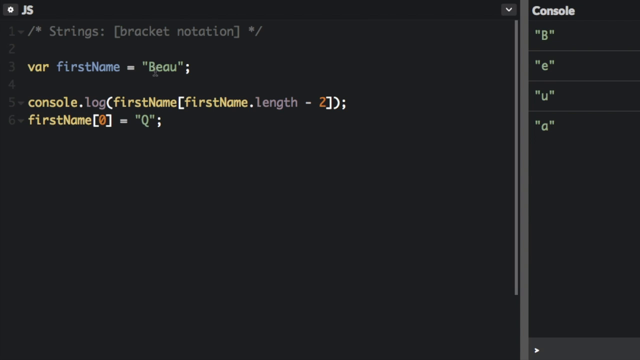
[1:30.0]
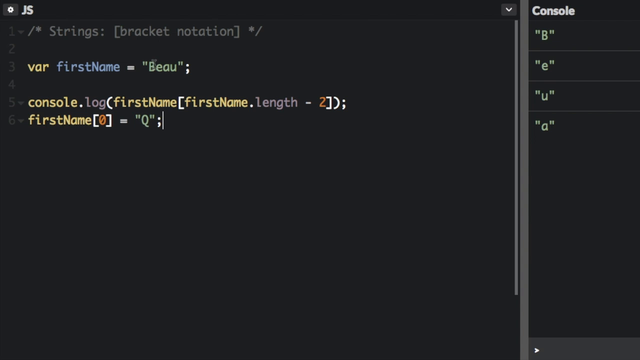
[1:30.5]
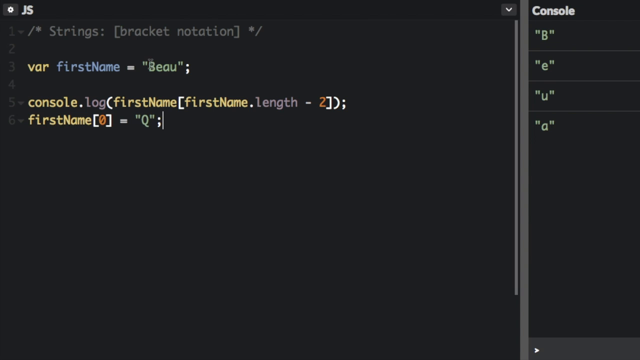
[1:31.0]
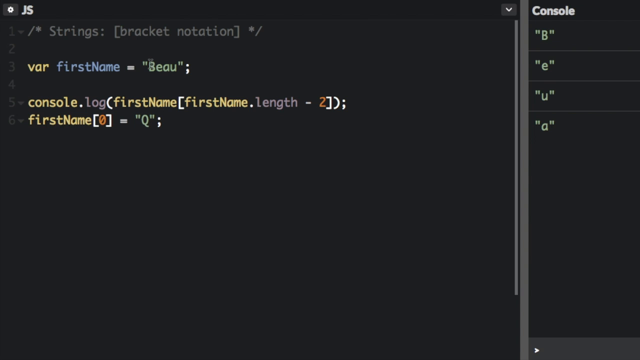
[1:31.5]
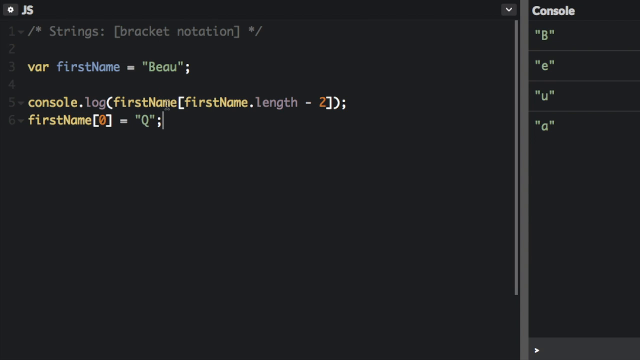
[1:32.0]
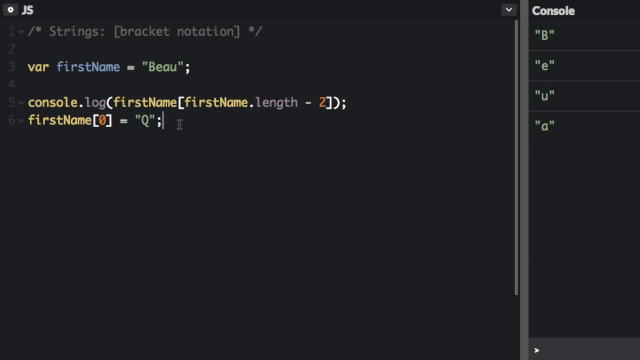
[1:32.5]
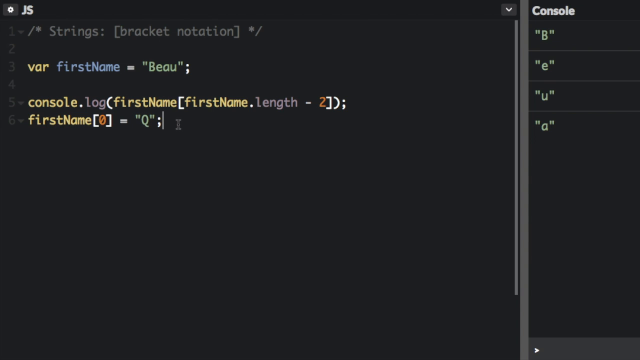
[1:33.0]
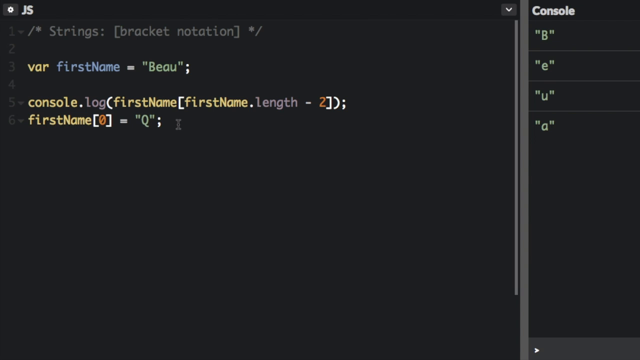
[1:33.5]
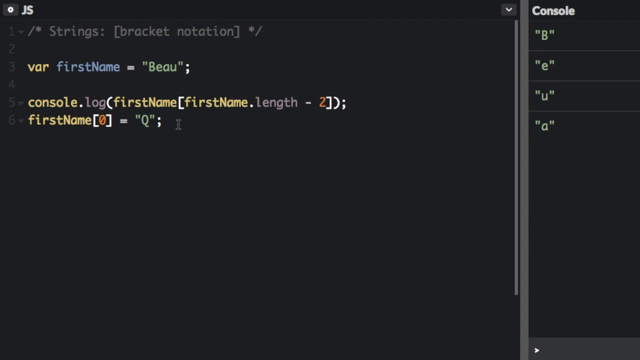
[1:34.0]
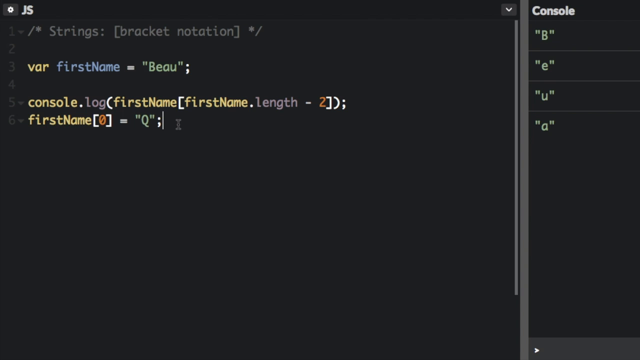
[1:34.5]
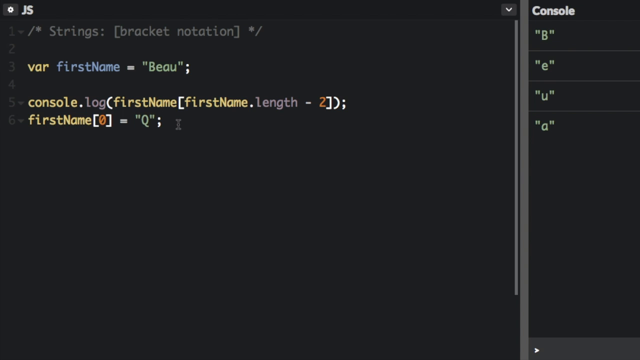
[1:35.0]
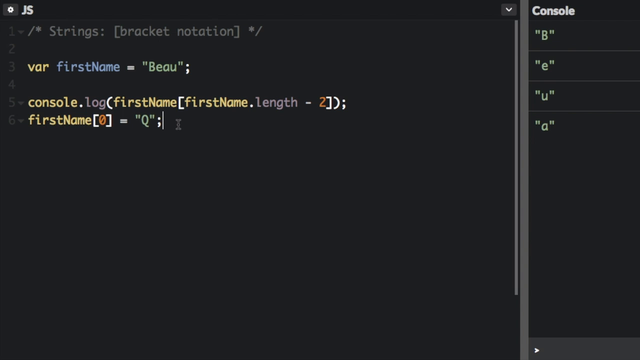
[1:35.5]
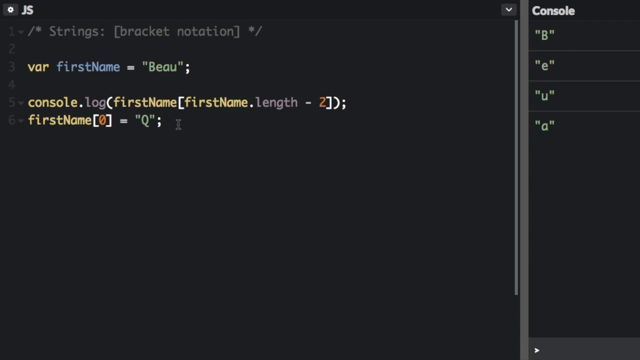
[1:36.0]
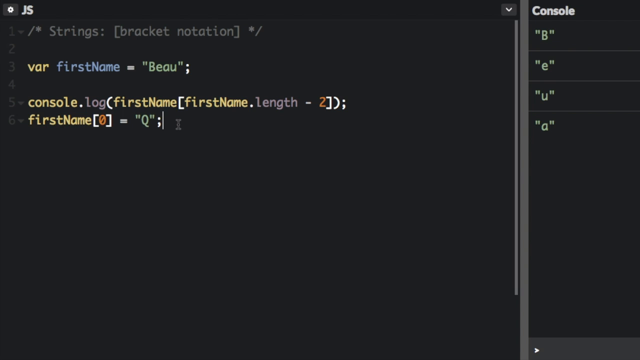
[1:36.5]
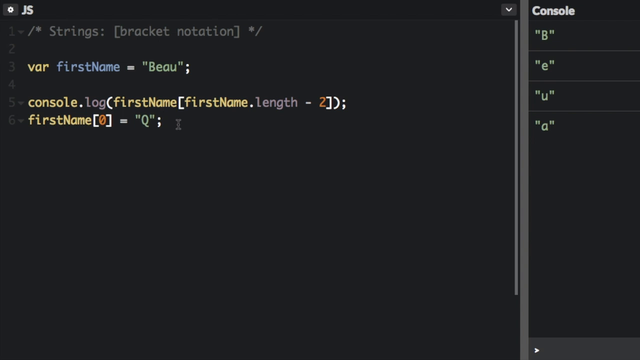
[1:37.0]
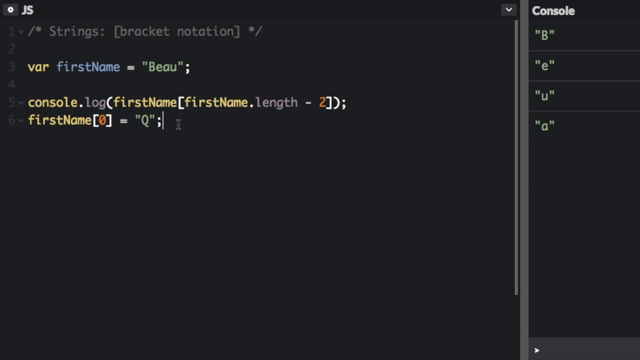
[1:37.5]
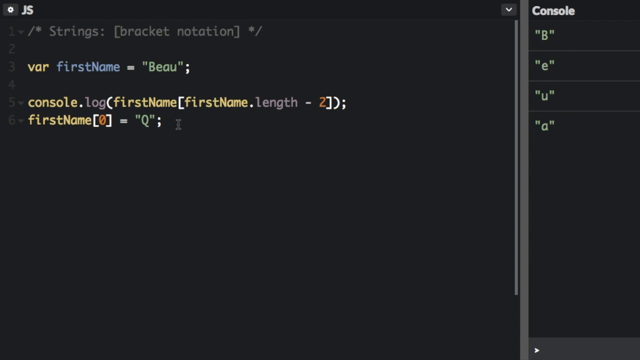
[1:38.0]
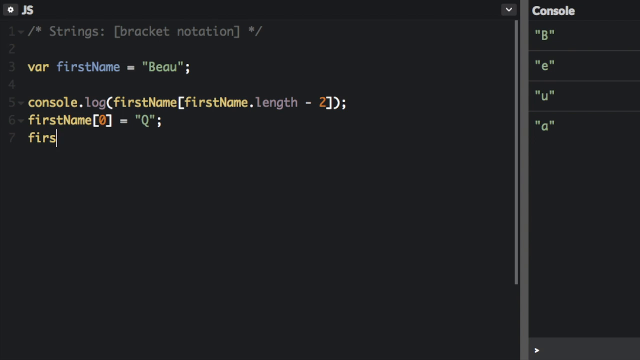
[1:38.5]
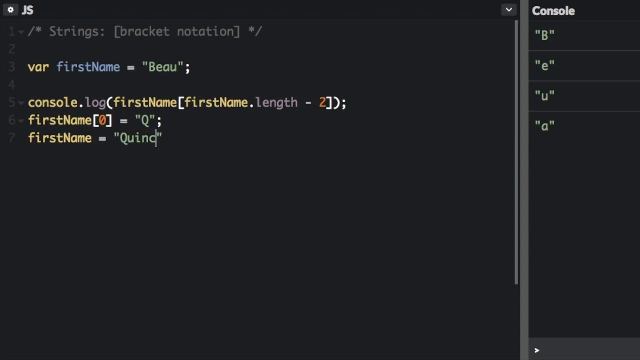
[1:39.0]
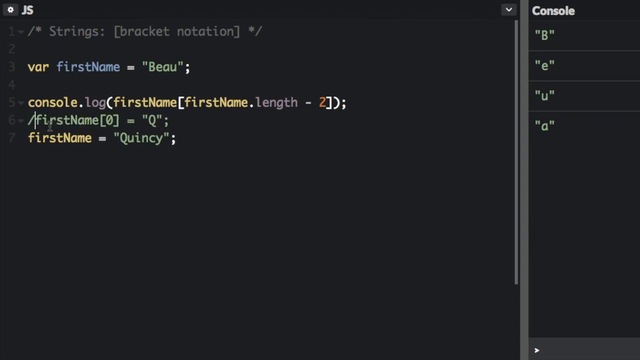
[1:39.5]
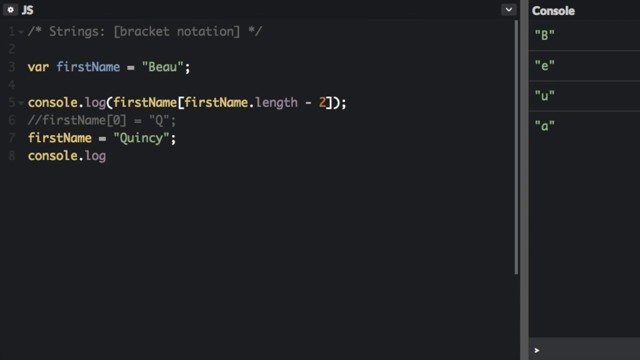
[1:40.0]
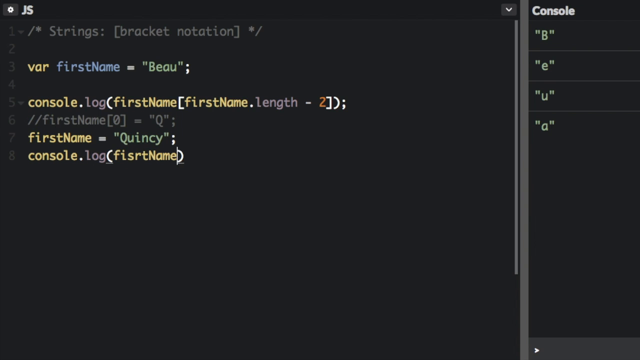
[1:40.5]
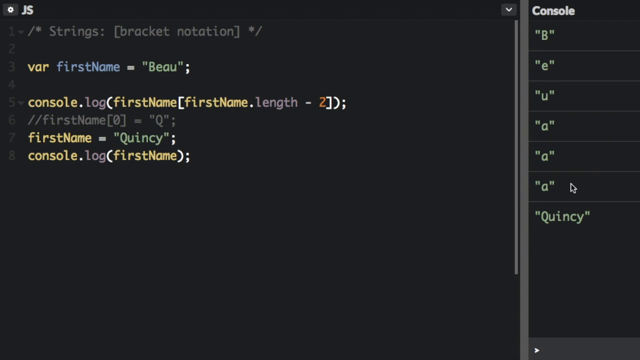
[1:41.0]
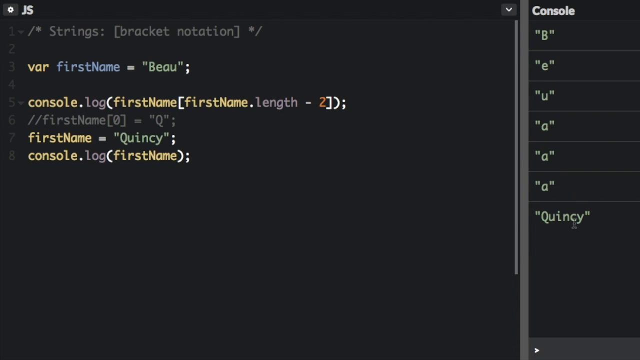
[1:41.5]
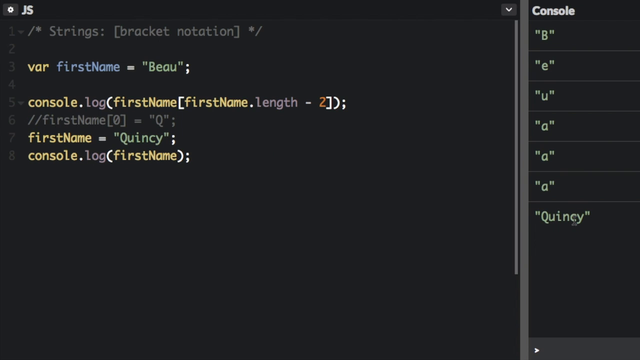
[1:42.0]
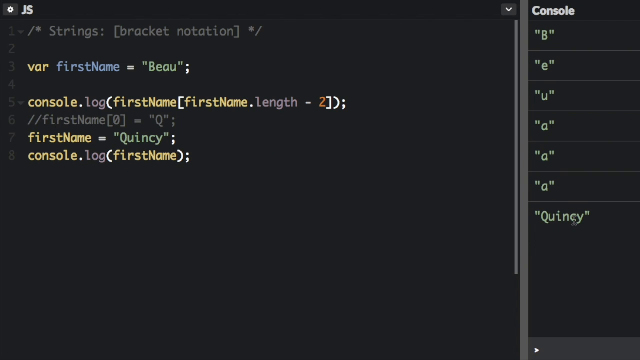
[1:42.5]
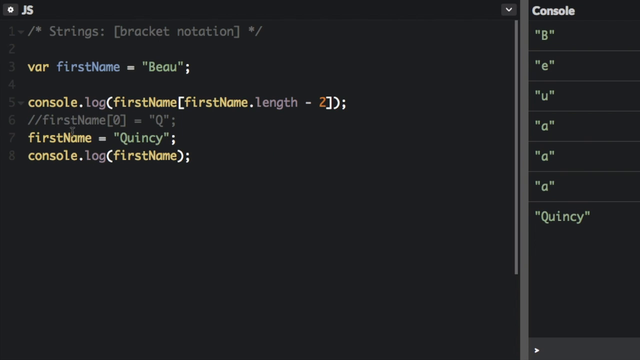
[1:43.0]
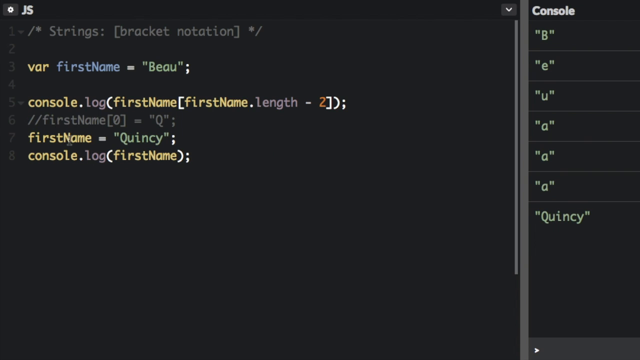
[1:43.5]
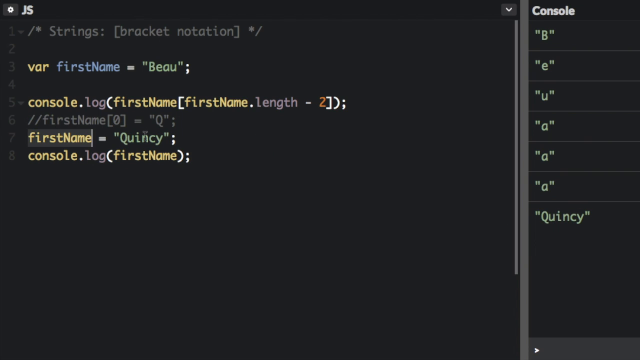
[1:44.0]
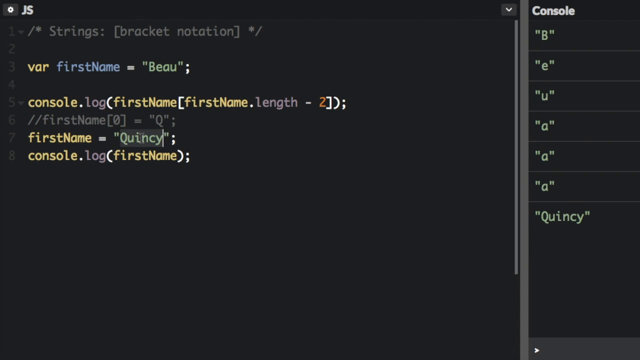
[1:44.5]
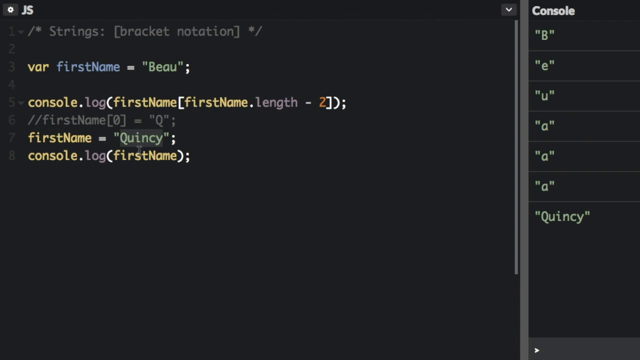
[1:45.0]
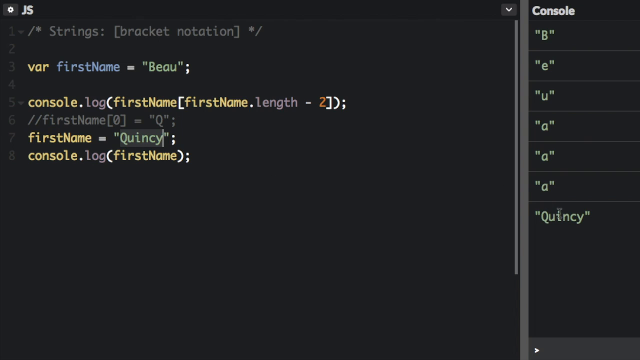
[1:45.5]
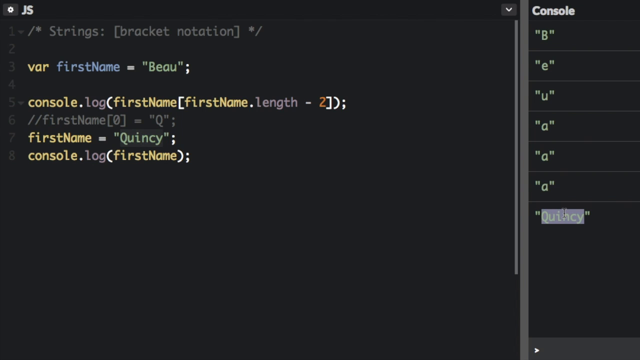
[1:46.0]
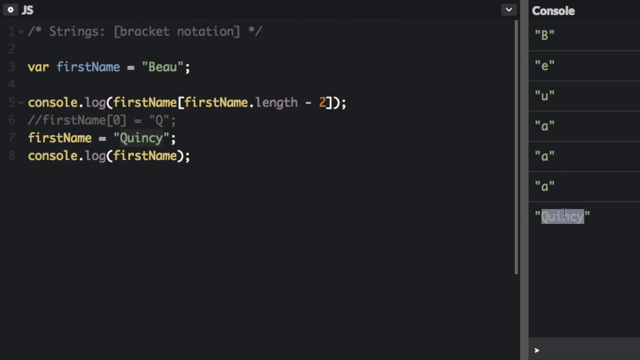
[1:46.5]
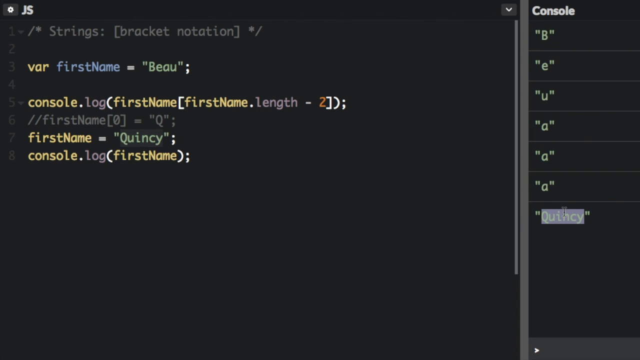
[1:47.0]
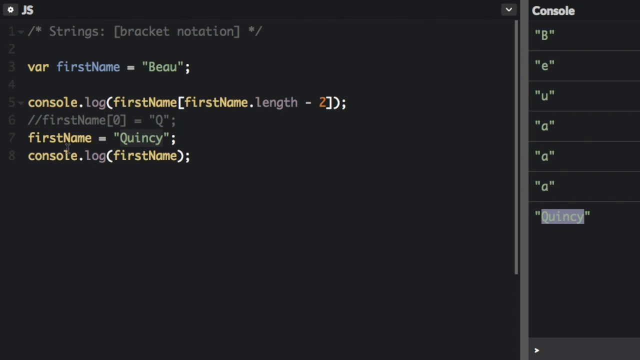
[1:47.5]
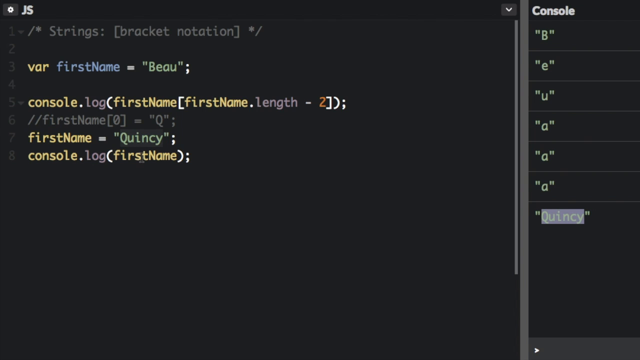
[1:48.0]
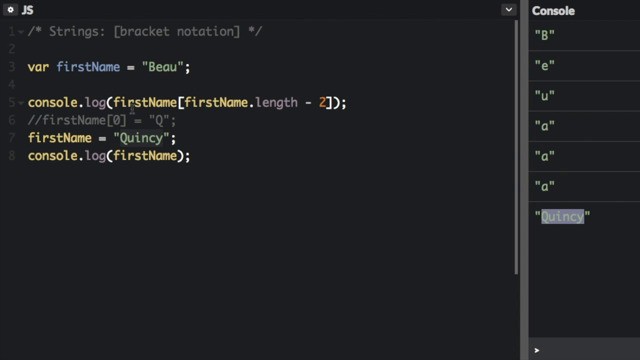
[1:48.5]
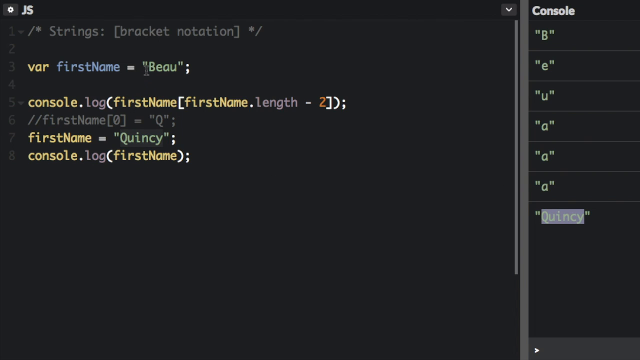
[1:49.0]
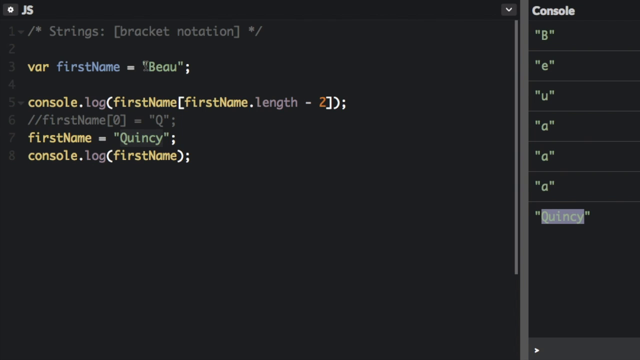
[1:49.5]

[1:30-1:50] The cursor flashes after the entry on line 6, which reads firstName, then a slashed zero within square brackets, then = "Q";. Entries are then made on line 7, firstName = "Quincy";, and below it on line 8, console.log(firstName). Further entries appear under "console" in the right column: "a", then below it "a", then below that "Quincy", all in quotation marks. The cursor highlights Quincy on line 7, moves to Quincy under the console column, then moves back up to Beau and back up to 4.